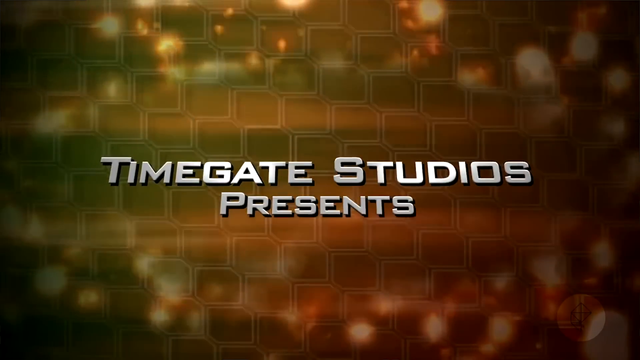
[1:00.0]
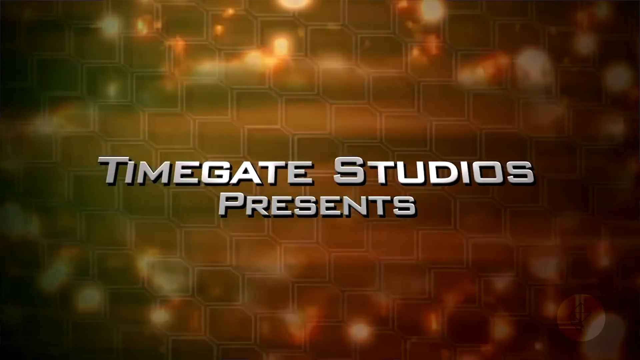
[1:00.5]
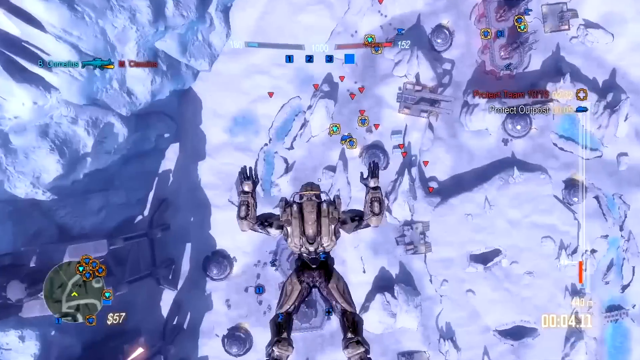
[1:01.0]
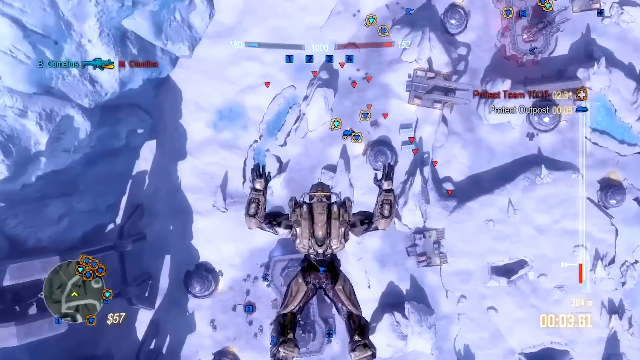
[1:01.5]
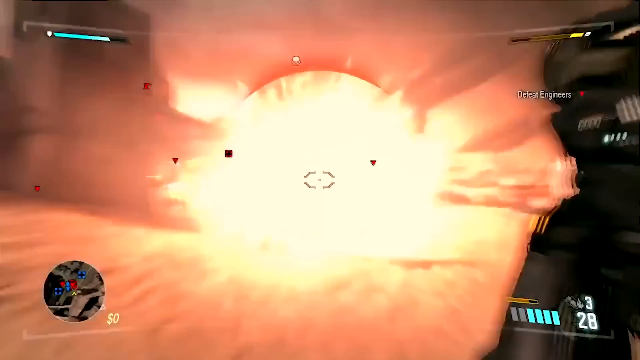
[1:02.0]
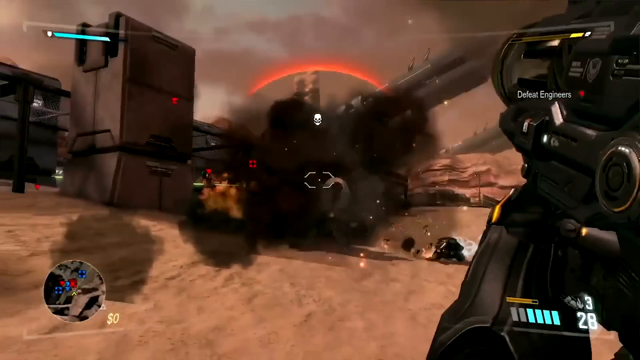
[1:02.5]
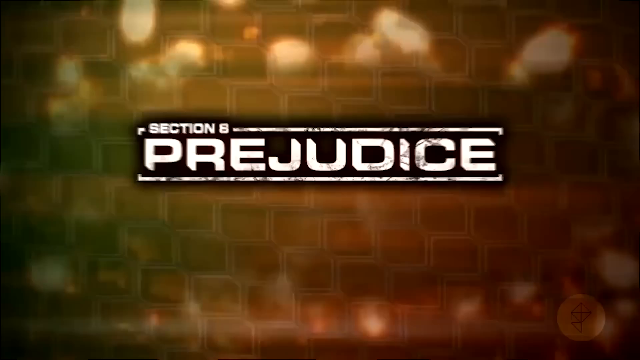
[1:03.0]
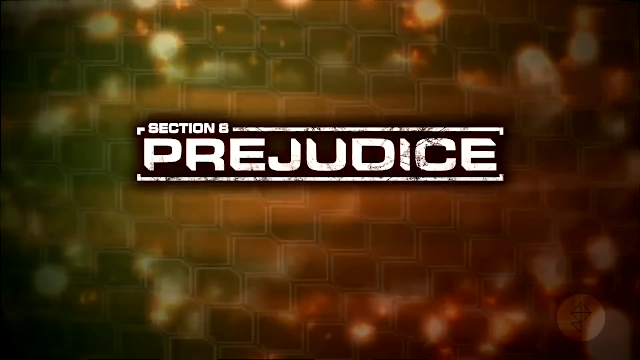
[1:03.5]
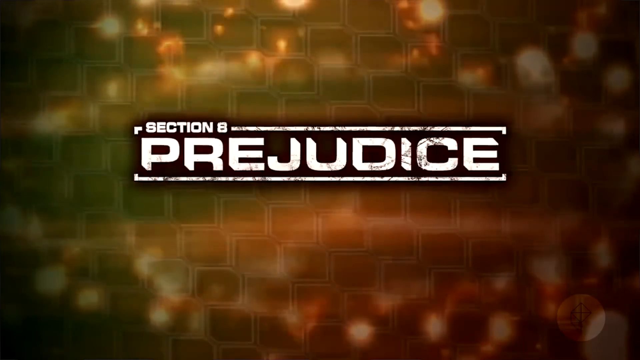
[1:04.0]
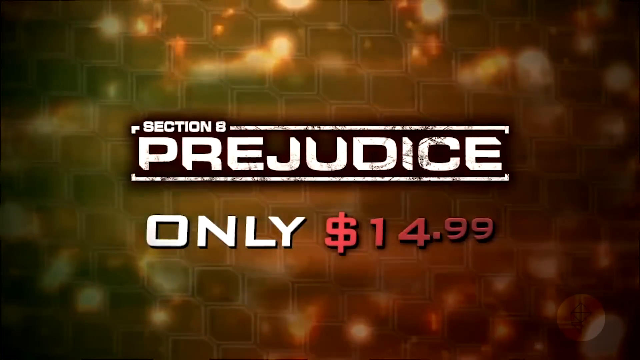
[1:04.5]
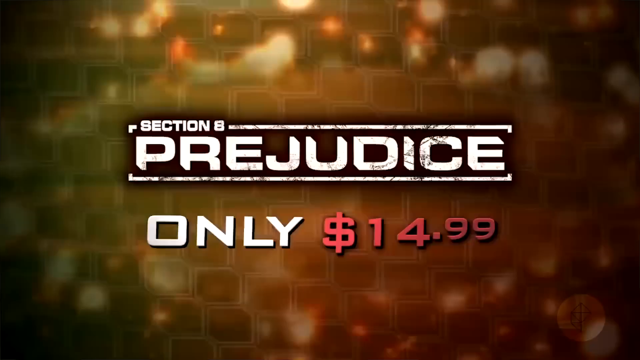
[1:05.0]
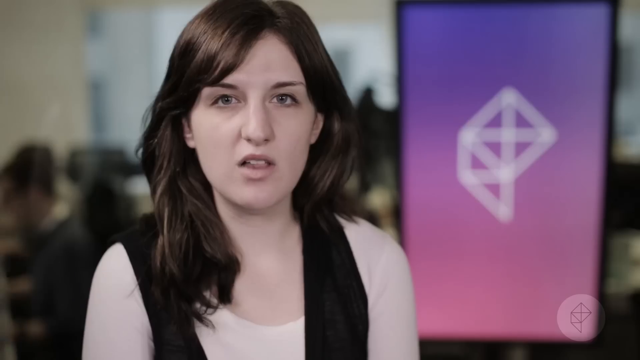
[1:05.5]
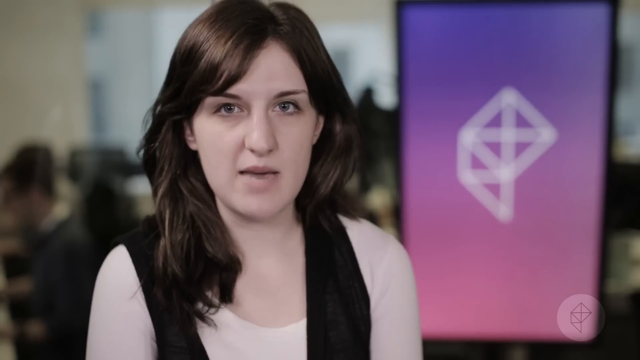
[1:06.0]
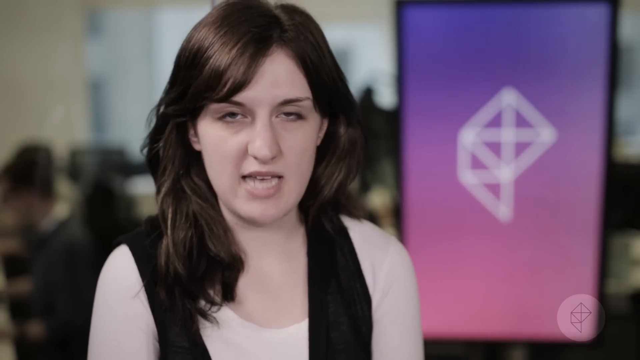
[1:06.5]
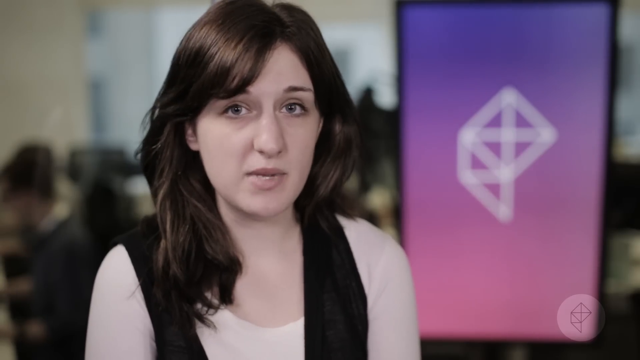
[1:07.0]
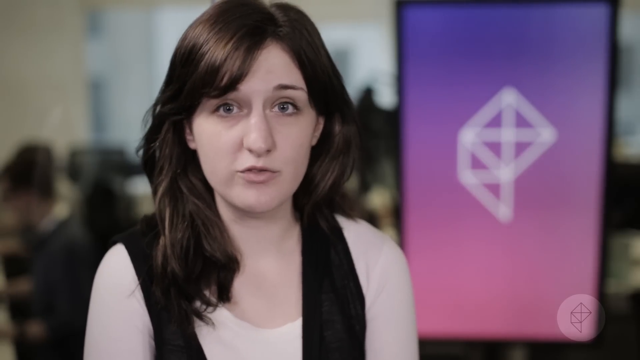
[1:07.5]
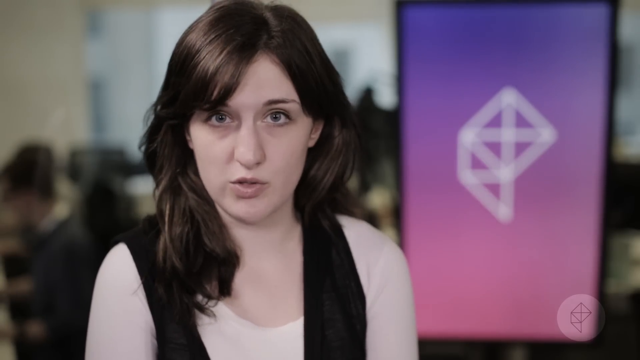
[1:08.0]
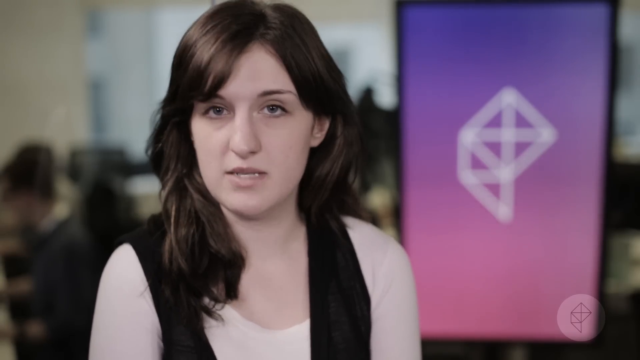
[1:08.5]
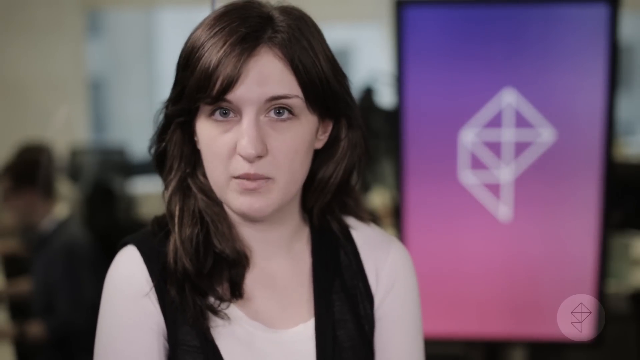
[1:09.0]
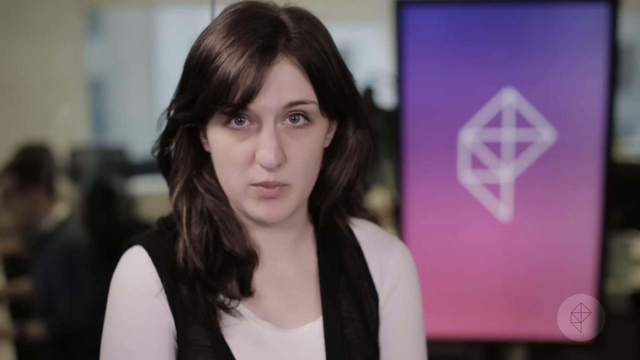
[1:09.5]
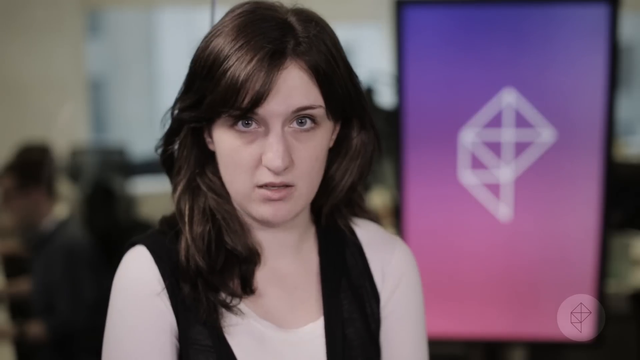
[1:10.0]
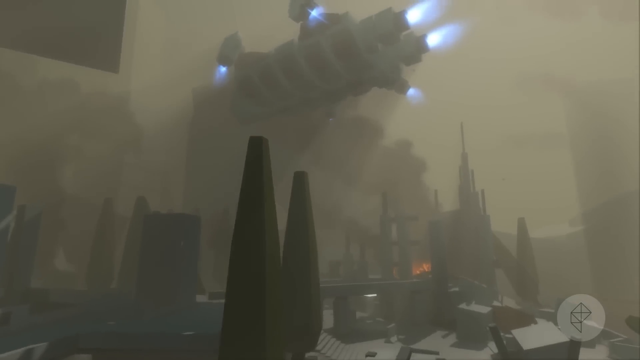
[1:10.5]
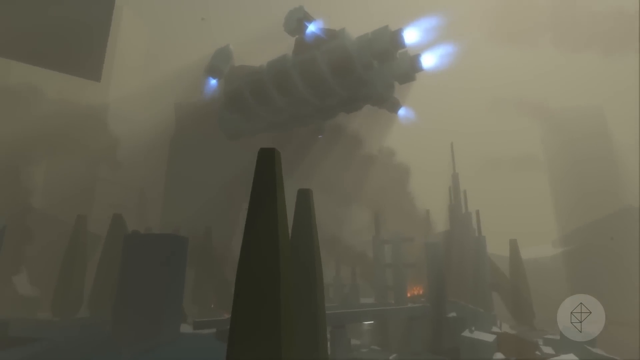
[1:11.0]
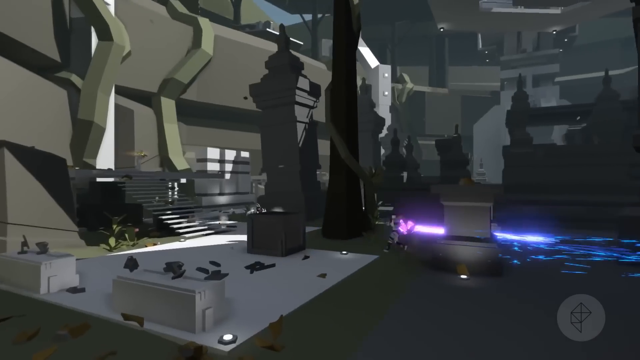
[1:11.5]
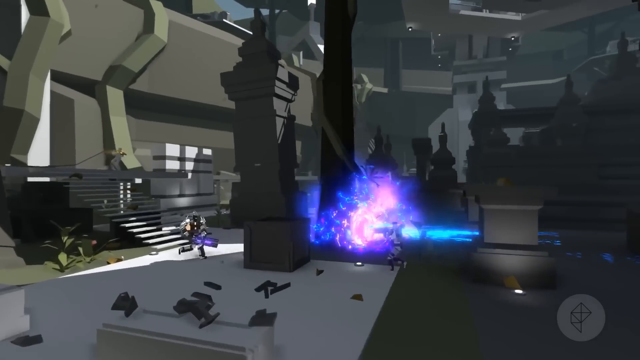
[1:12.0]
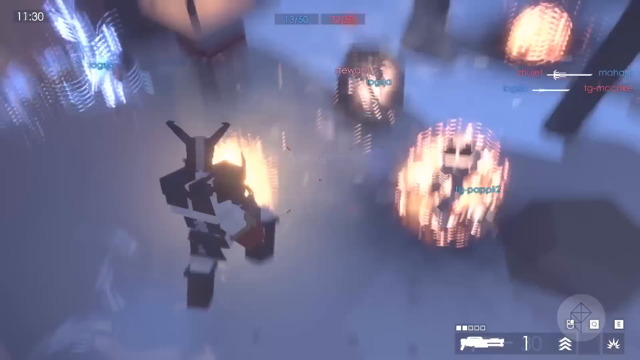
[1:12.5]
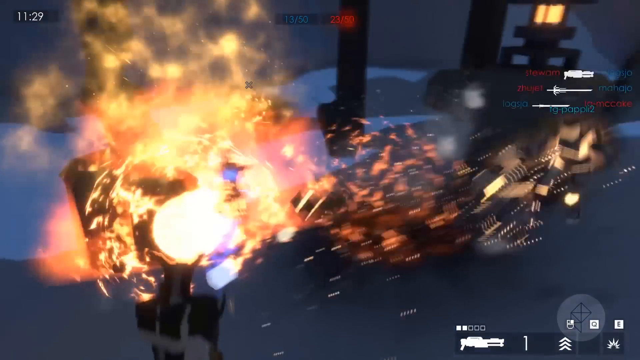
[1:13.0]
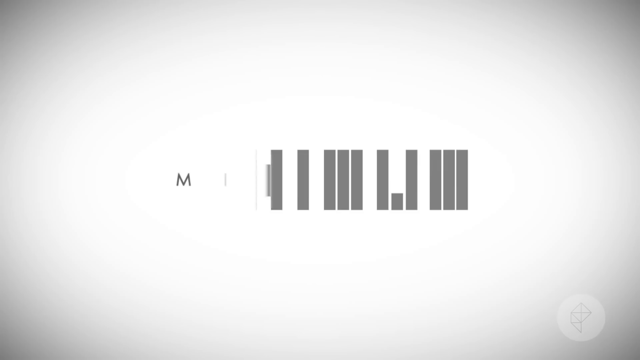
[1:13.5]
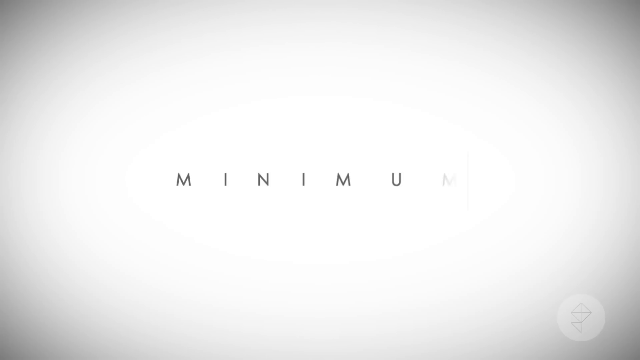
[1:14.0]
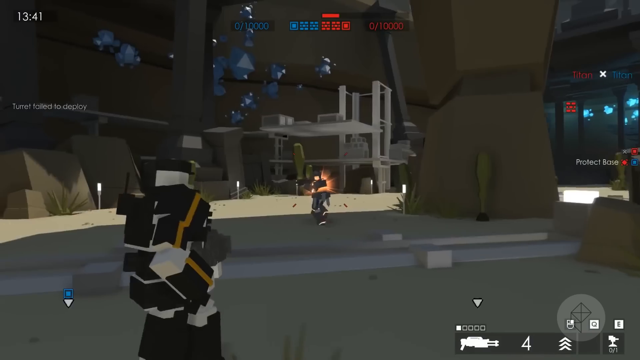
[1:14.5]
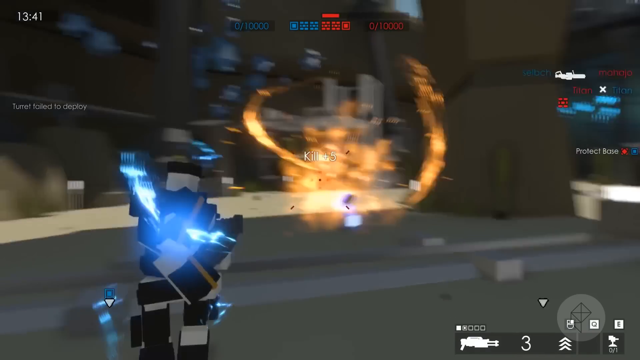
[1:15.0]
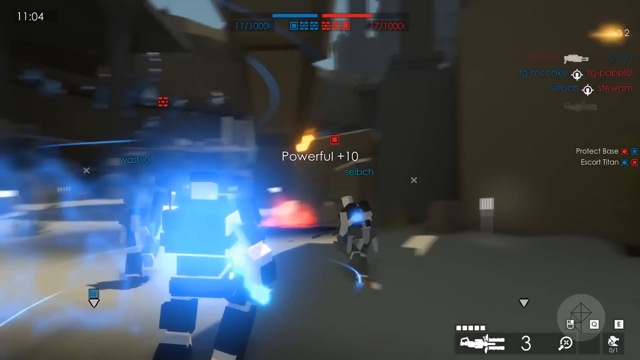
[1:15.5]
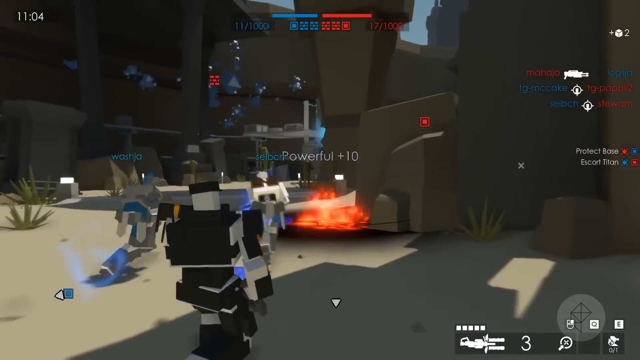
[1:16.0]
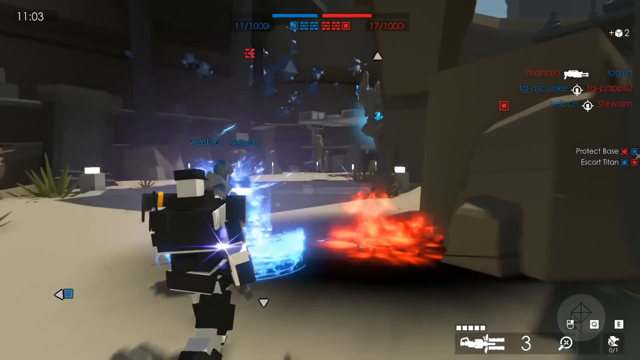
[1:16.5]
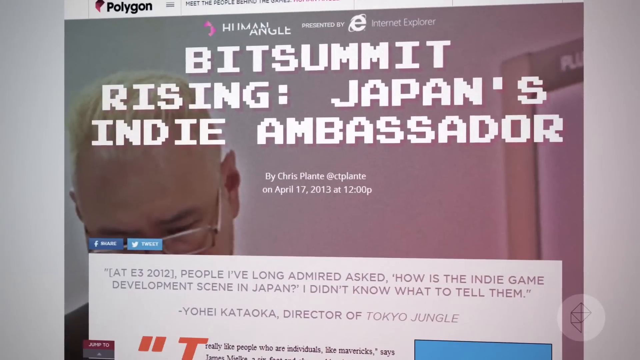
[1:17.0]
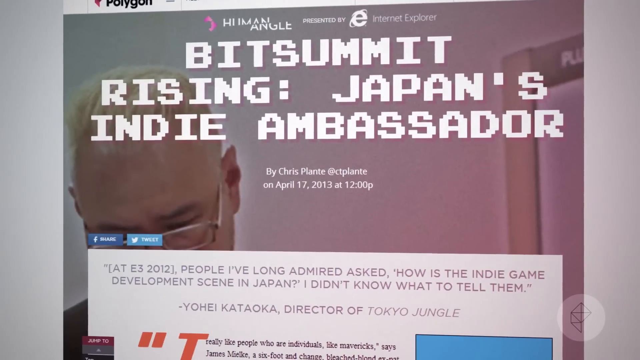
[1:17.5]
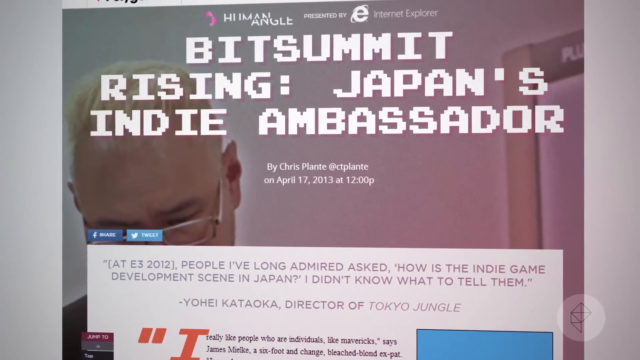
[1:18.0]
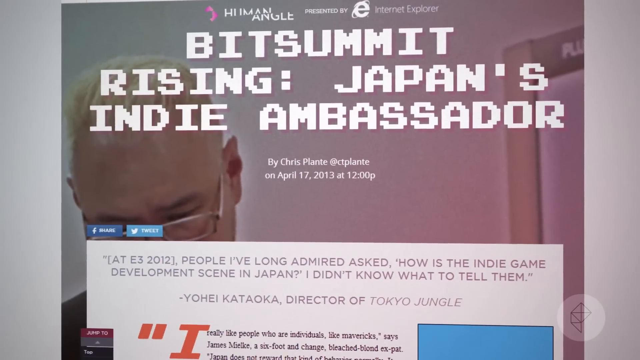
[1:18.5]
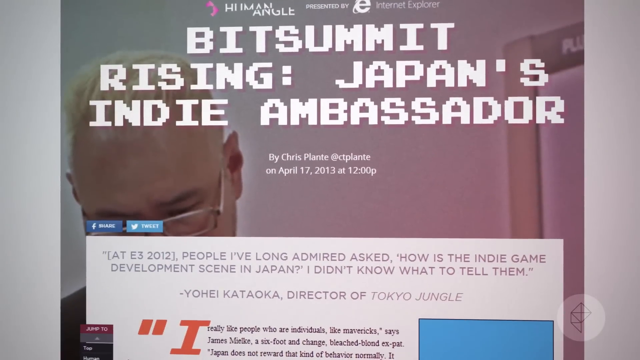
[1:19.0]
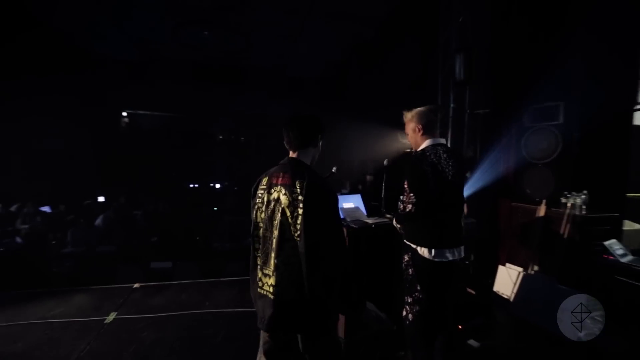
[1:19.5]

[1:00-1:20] Slightly metallic-looking text reads "TimeGate Studios presents" over a background of what looks to be a honeycomb-type pattern with fire and destruction in between. Video game footage of Section 8 follows: a character drops down onto an icy battleground, seen from a bird's-eye view. First-person shooter footage shows the player with some sort of cannon, firing it off. A logo reads "Section 8 Prejudice" along with "only 1499." The video cuts back to the woman, still framed from the shoulders up, talking with the camera very professionally; her eyebrows move up and her face draws out. Next is what looks to be a very futuristic, dystopian video game setting with brown buildings and a sort of spaceship with blue lights everywhere, where very blocky-looking cartoon player characters shoot at each other.